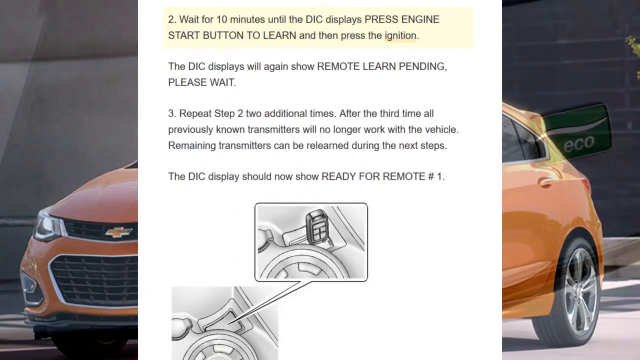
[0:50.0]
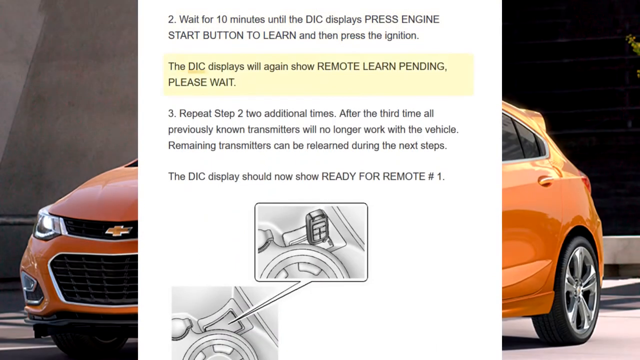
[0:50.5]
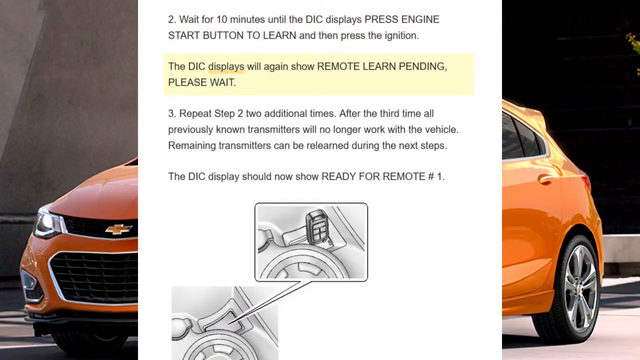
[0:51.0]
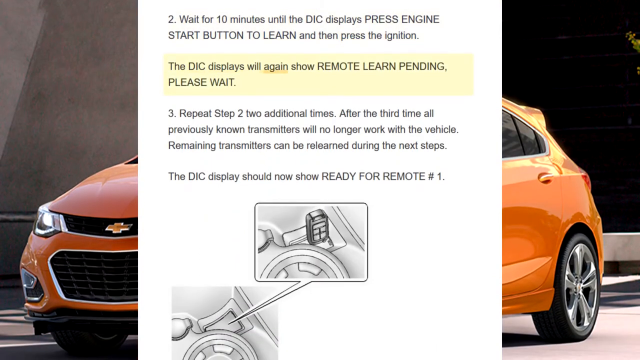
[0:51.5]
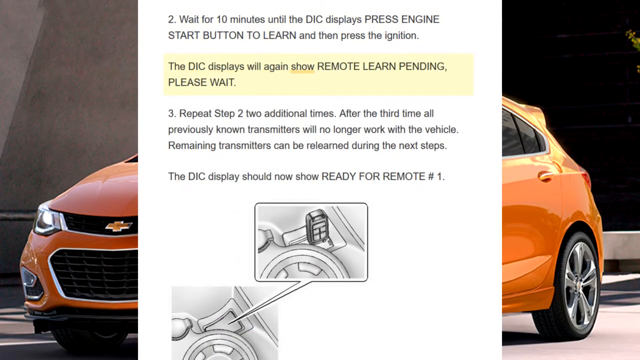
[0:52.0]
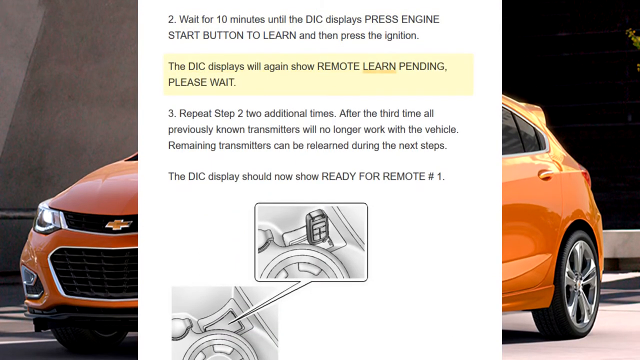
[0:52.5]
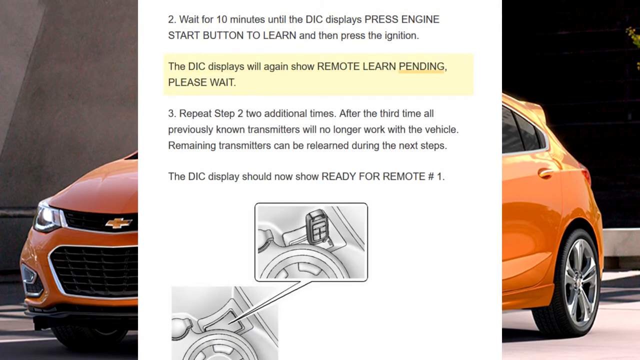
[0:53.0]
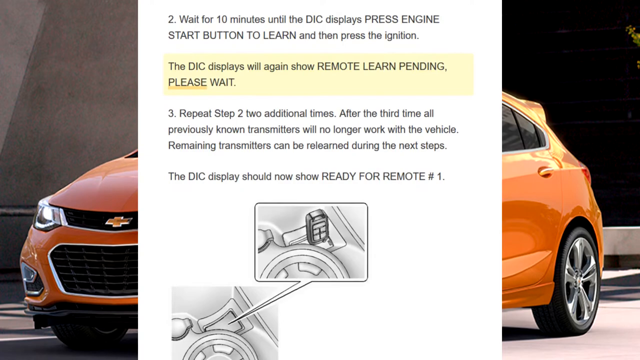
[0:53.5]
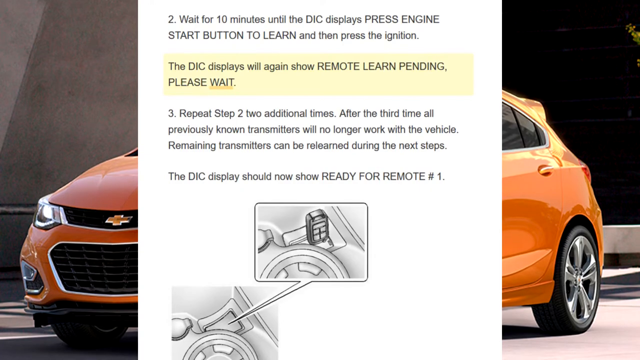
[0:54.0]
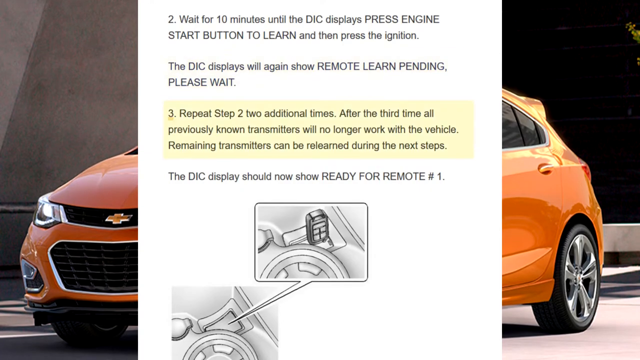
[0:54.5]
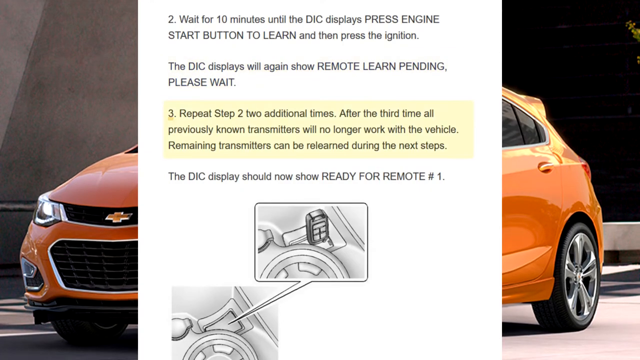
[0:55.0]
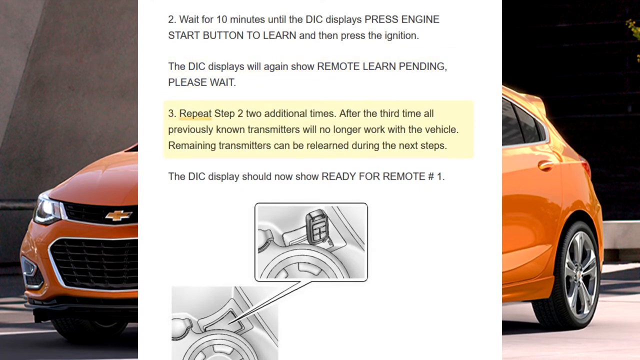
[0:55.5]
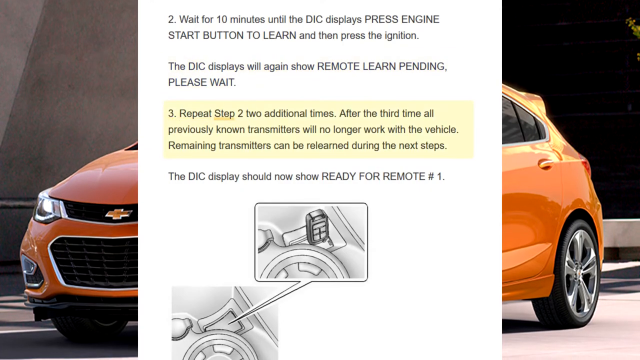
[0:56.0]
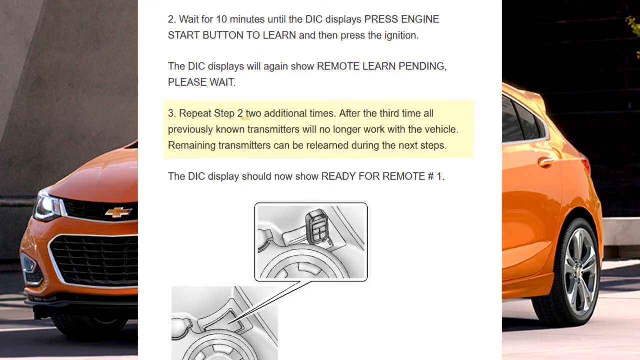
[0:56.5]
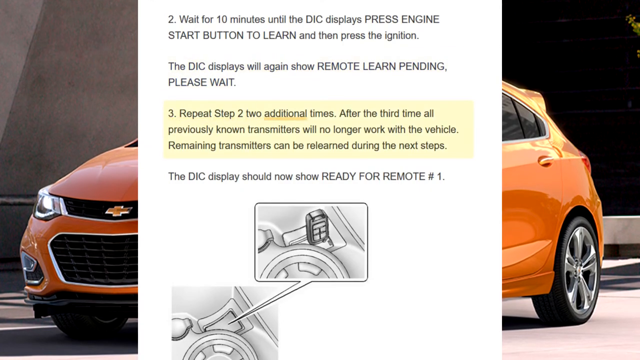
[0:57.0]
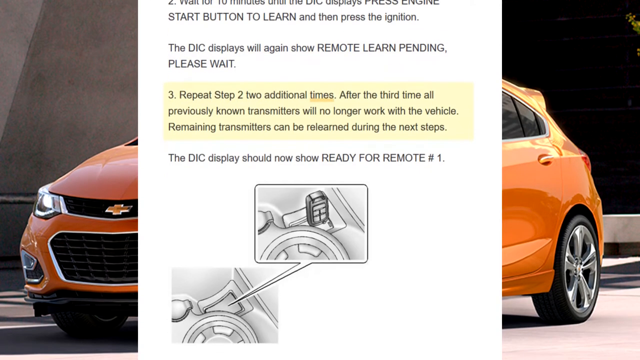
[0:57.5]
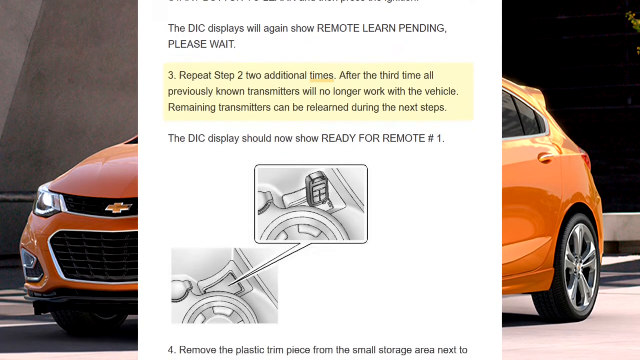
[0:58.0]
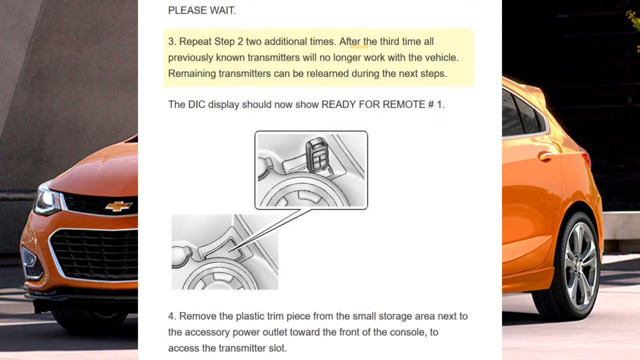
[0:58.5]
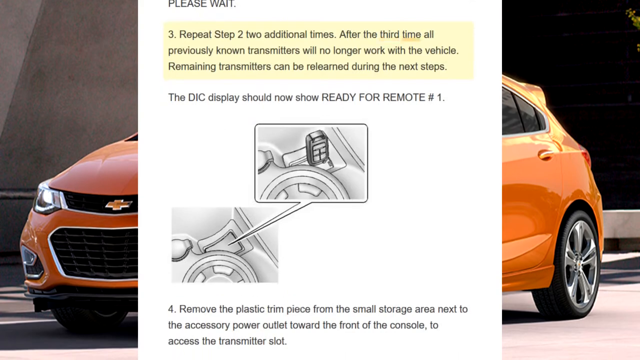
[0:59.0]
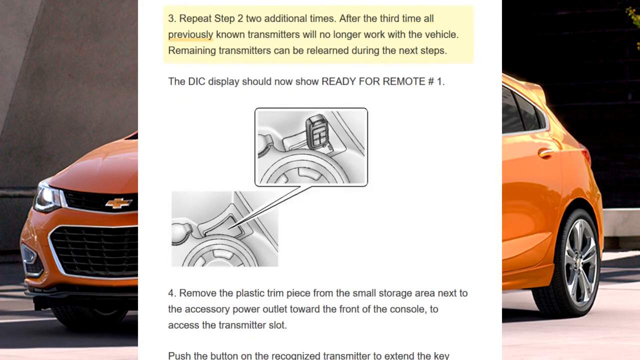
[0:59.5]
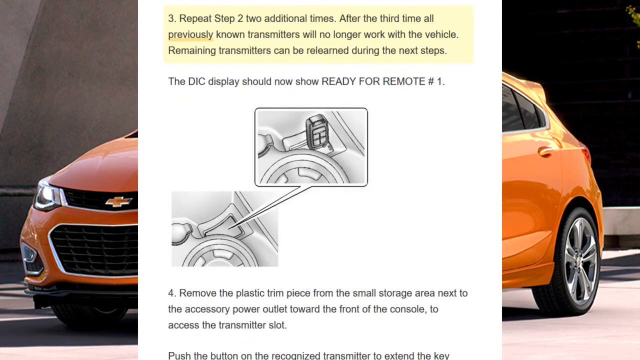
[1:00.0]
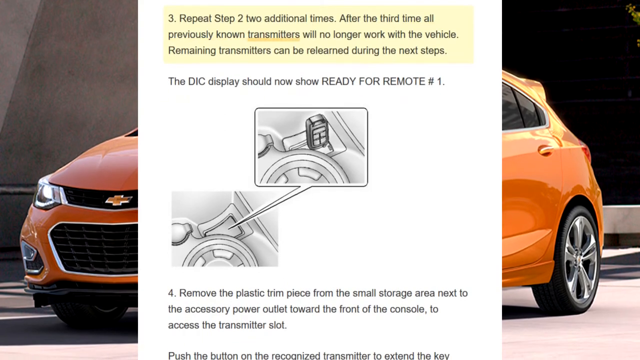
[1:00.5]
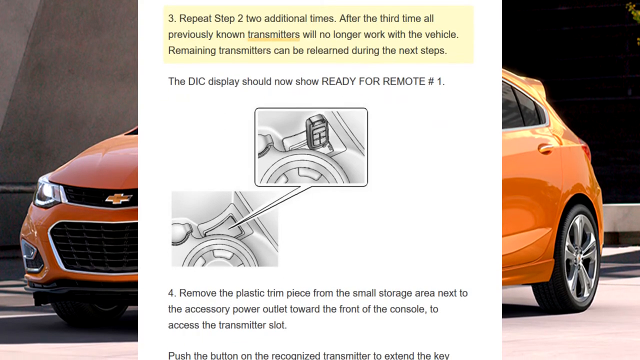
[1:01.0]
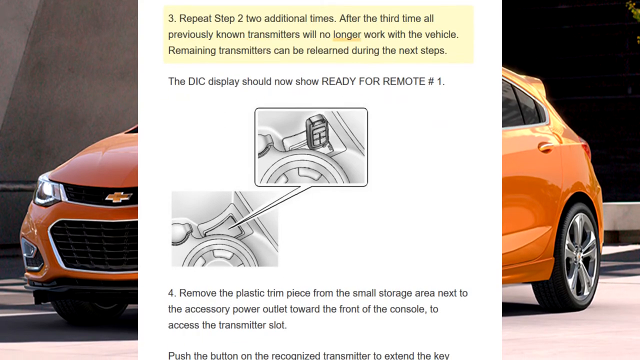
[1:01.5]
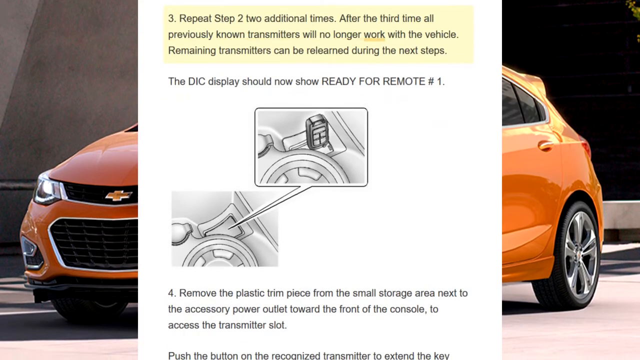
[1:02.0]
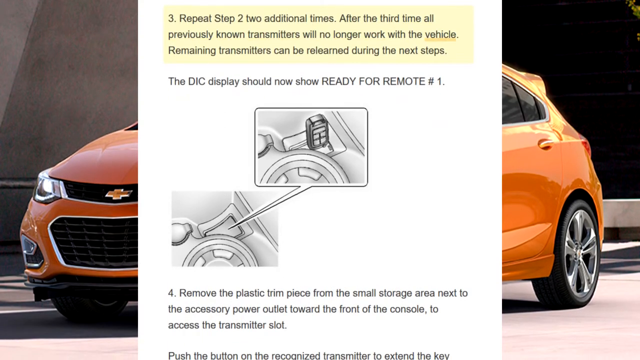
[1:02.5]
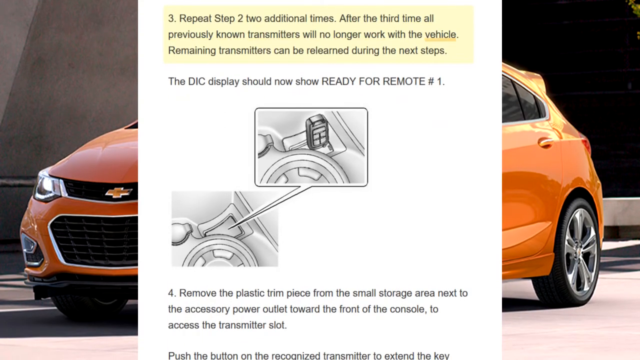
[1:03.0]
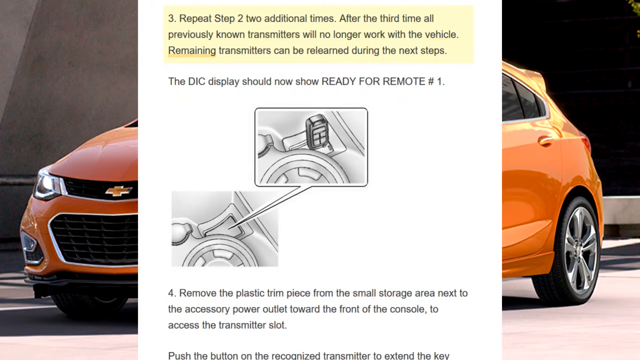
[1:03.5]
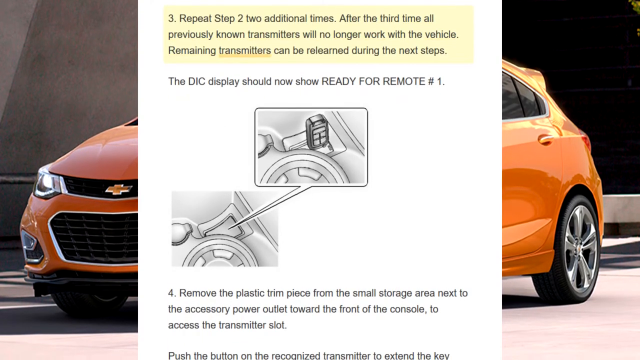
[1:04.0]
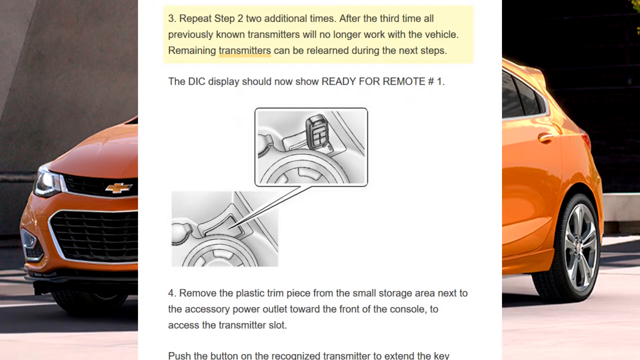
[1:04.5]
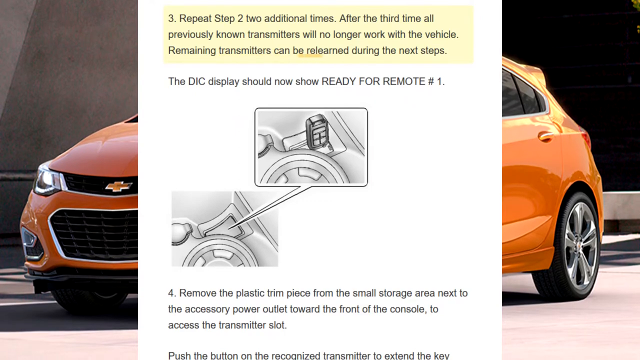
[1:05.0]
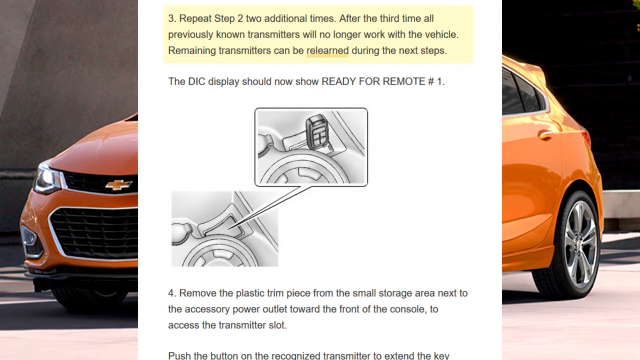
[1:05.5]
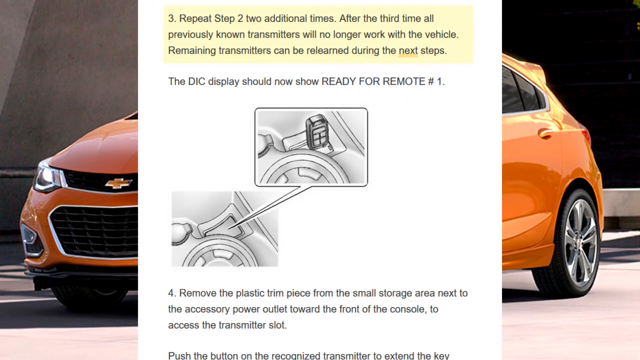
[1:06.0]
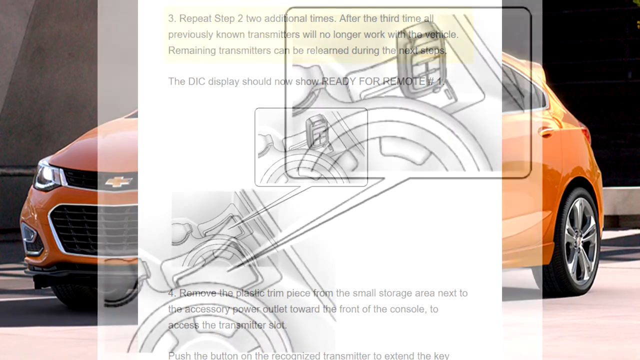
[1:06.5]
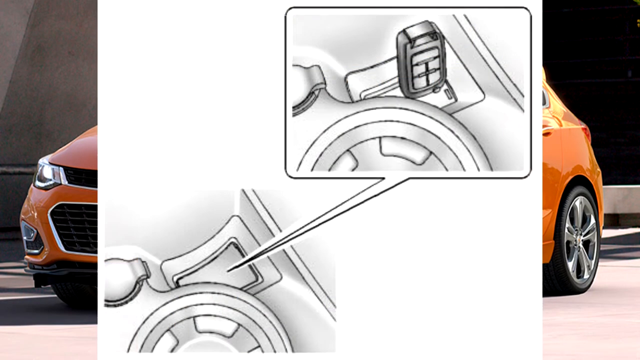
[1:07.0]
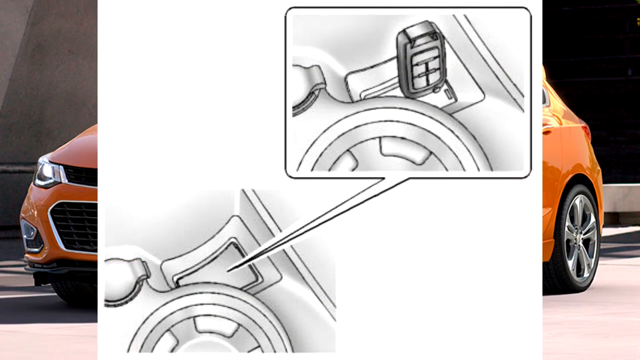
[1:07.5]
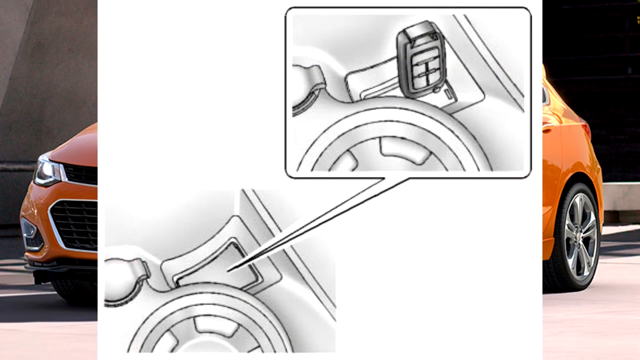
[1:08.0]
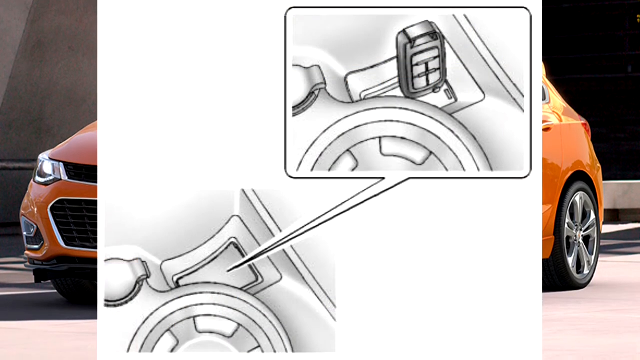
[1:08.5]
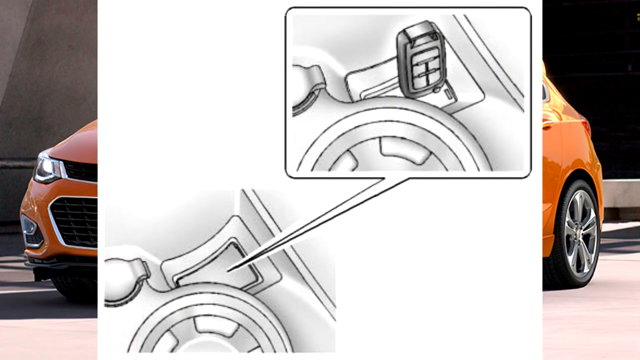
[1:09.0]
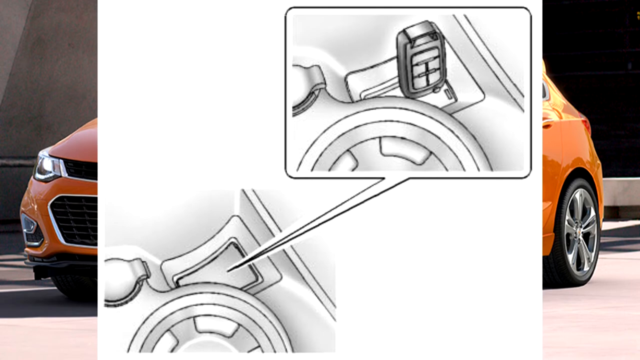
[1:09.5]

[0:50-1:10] The highlighting moves down to the second paragraph of this page and its words begin to be underlined. Behind the paper is now an orange car: its back driver's side fender, back door and wheel are on the right side, and the front edge of the grill and hood are on the left, with an orange Chevy logo in the center. The view slowly pans down a little. The highlight moves to the third paragraph, which begins with a three, and the page scrolls down further. Concrete is on the left side behind the car, darkness on the right, and concrete below it. It then moves to the section with the images and zooms in close on them; they seem to be drawn in black and white, with one at the top right and one at the bottom left. The view keeps slowly panning down.